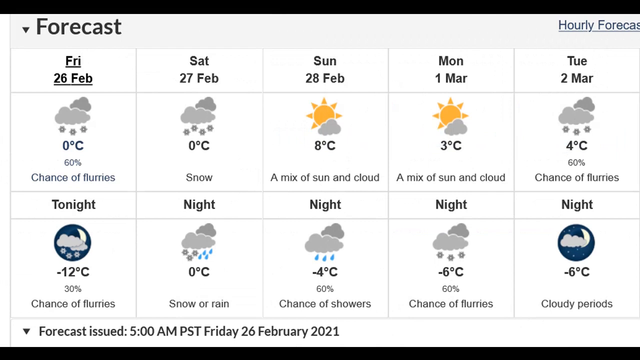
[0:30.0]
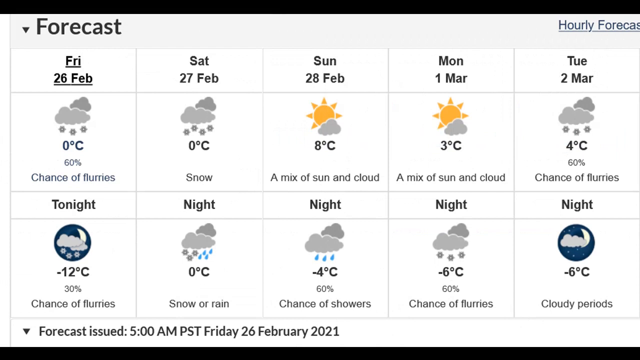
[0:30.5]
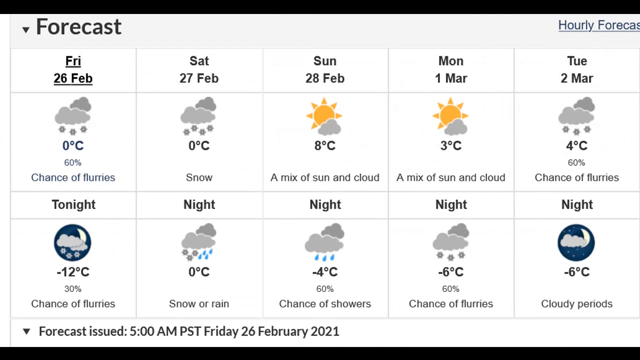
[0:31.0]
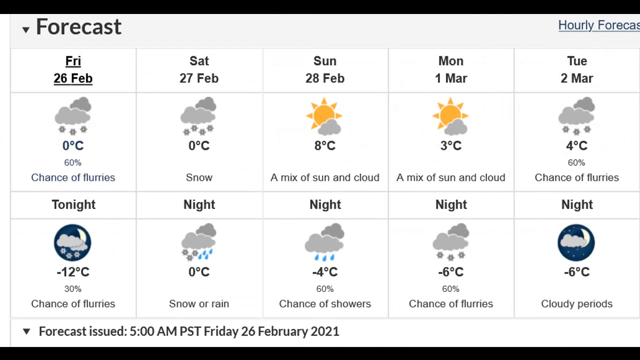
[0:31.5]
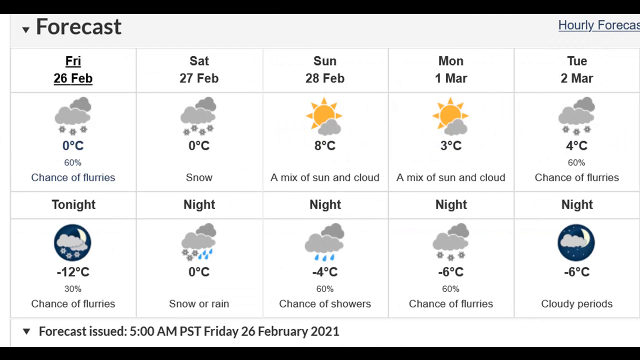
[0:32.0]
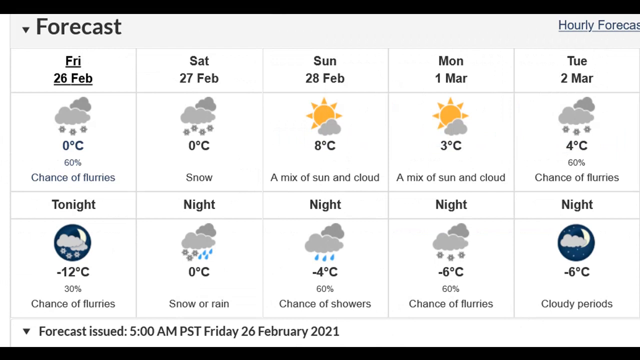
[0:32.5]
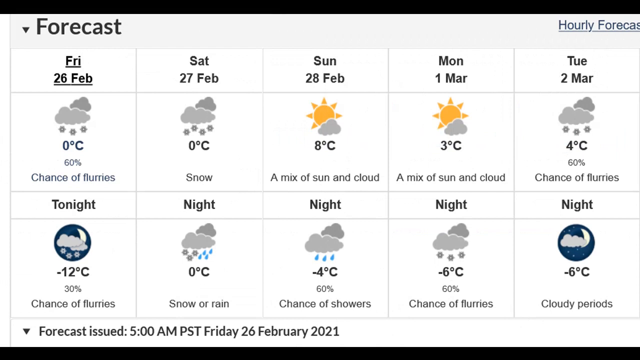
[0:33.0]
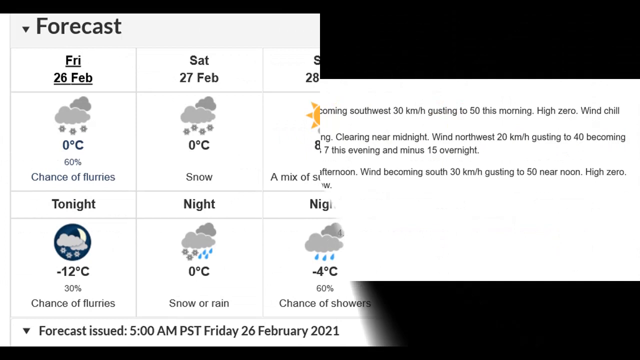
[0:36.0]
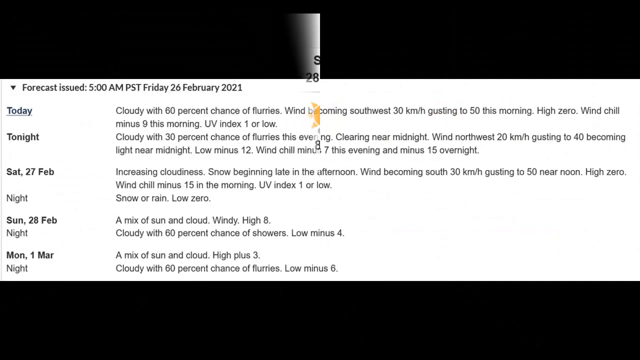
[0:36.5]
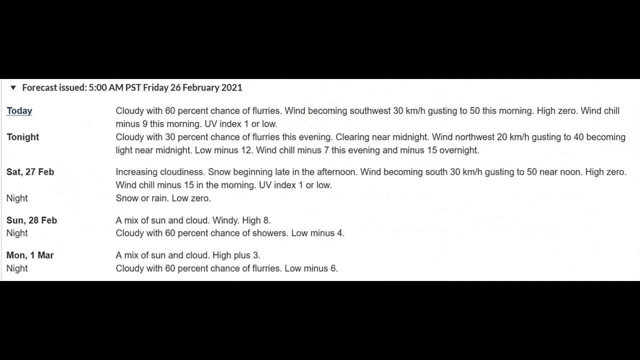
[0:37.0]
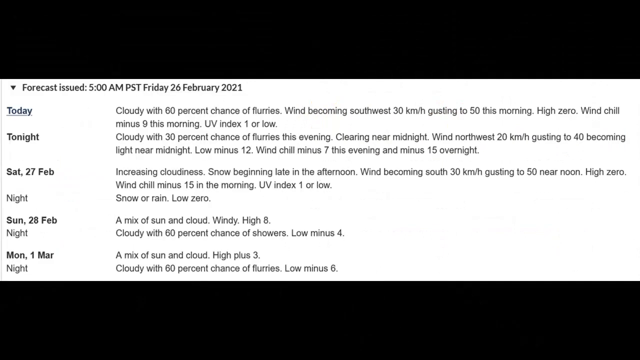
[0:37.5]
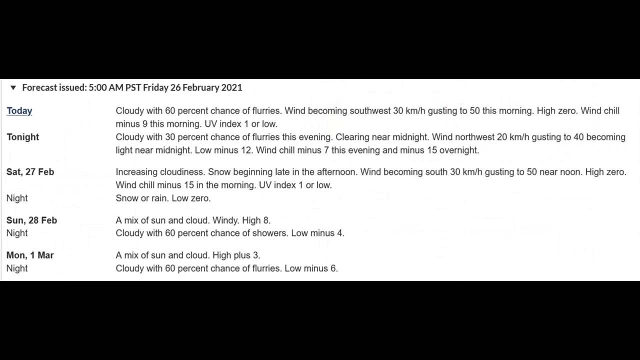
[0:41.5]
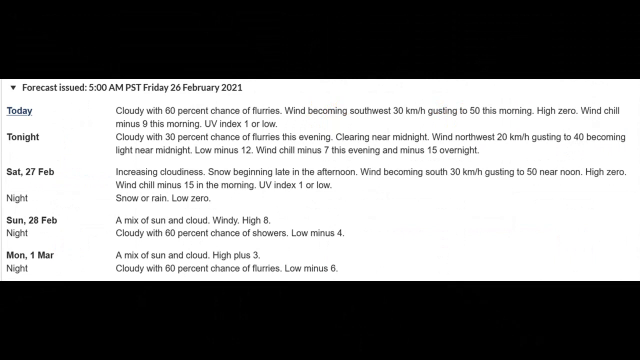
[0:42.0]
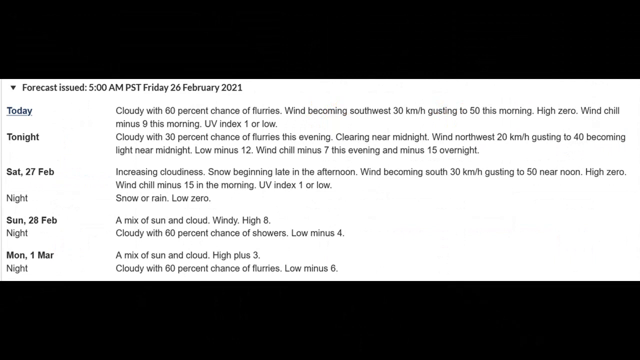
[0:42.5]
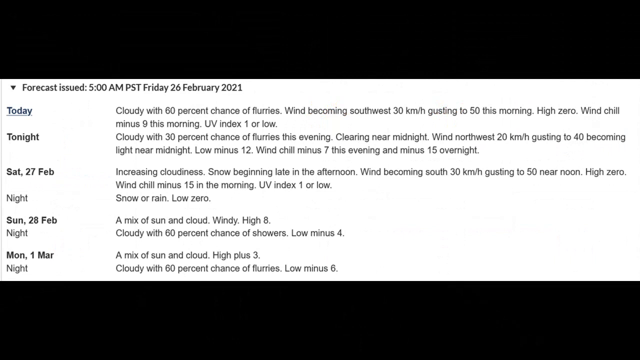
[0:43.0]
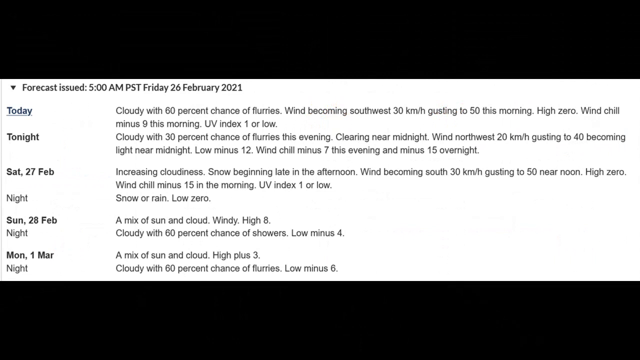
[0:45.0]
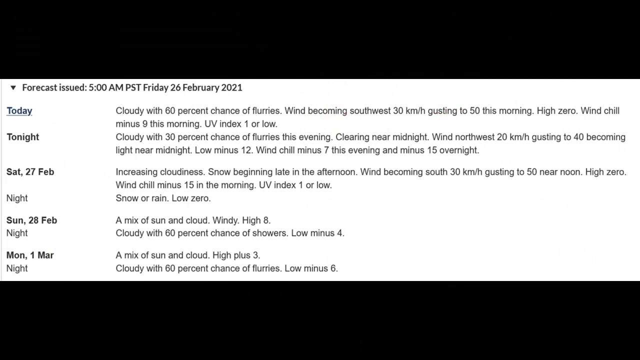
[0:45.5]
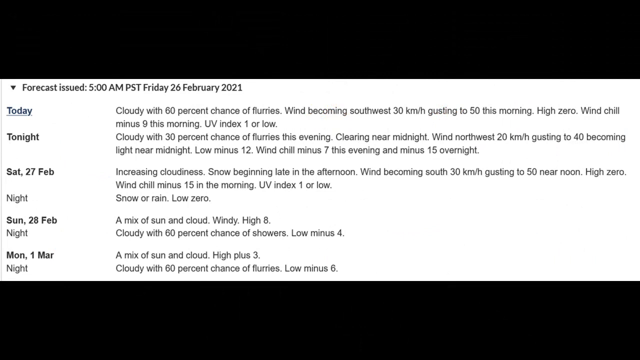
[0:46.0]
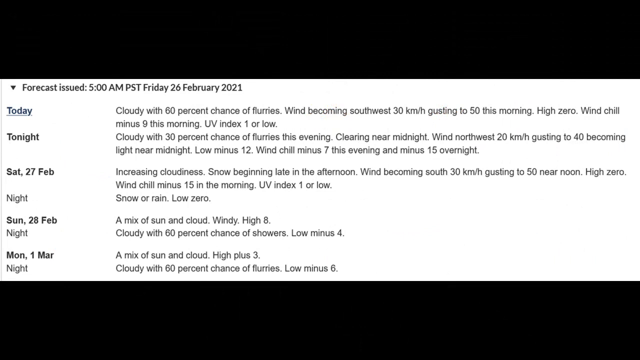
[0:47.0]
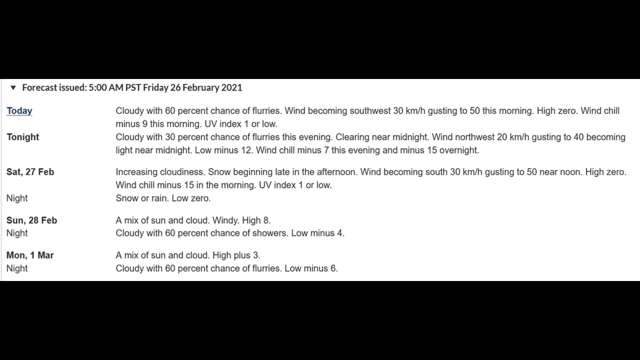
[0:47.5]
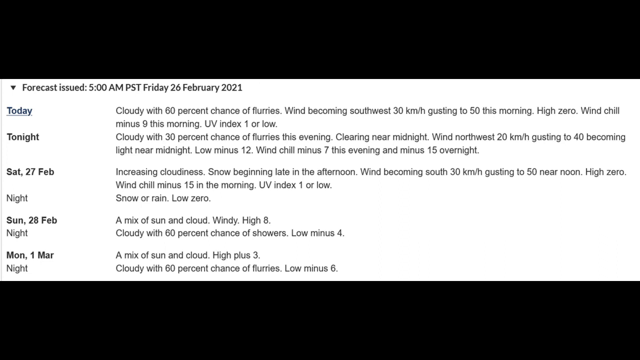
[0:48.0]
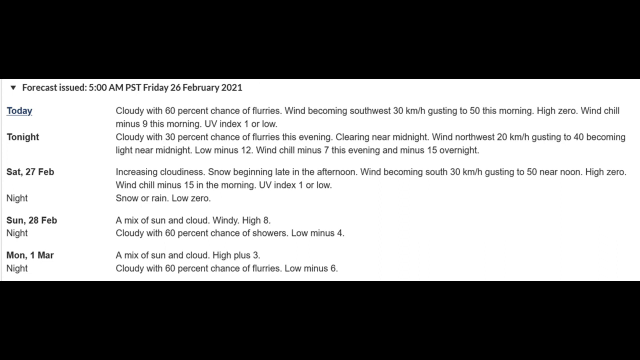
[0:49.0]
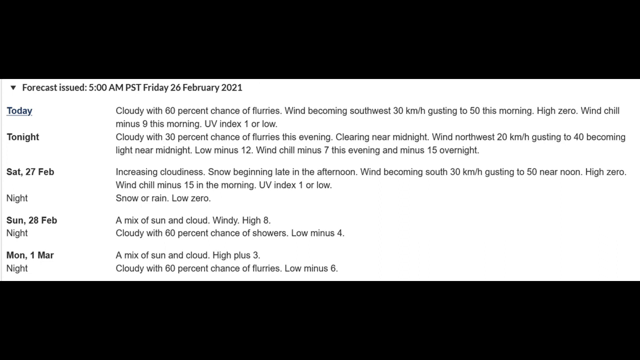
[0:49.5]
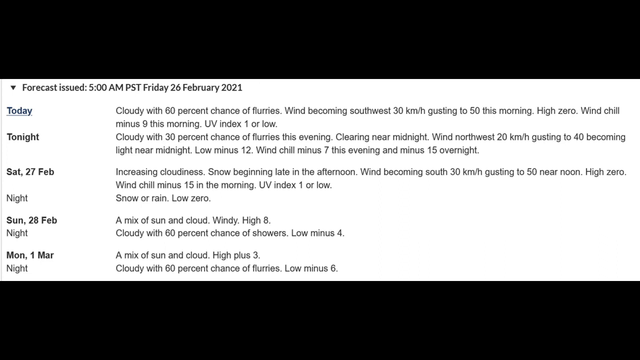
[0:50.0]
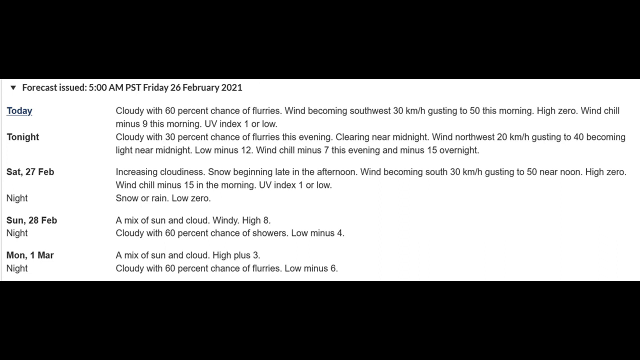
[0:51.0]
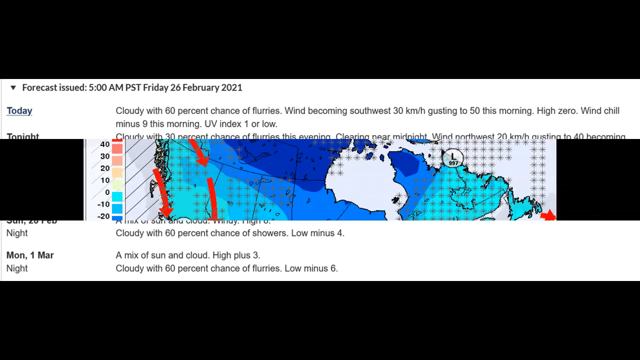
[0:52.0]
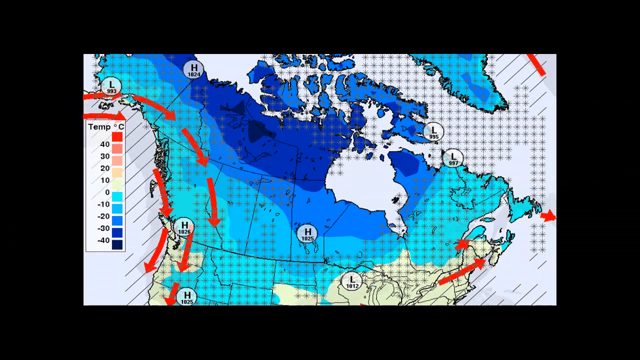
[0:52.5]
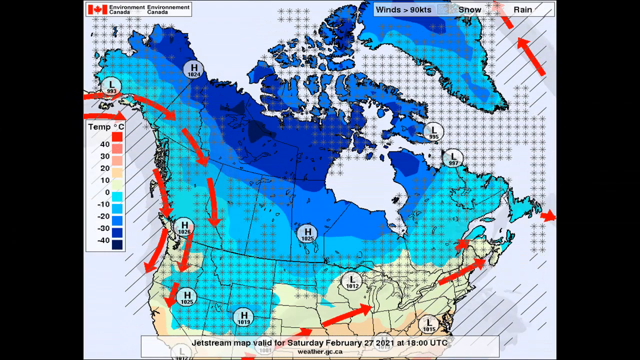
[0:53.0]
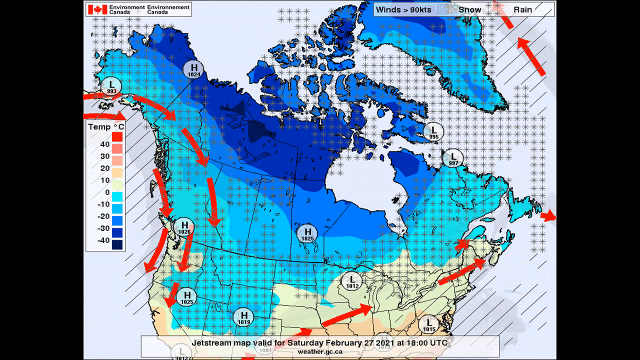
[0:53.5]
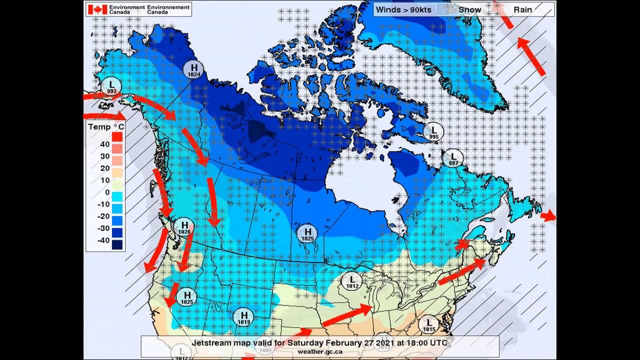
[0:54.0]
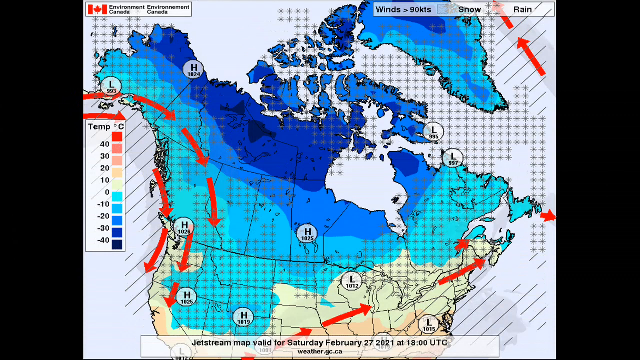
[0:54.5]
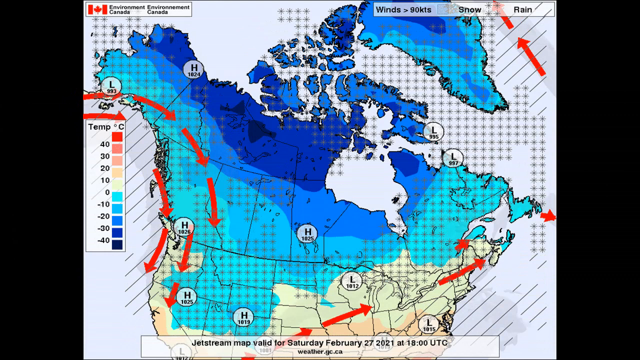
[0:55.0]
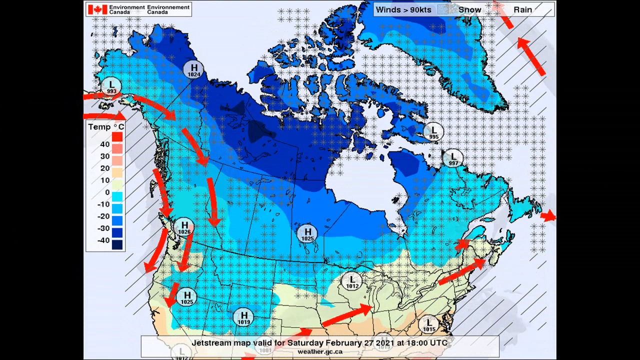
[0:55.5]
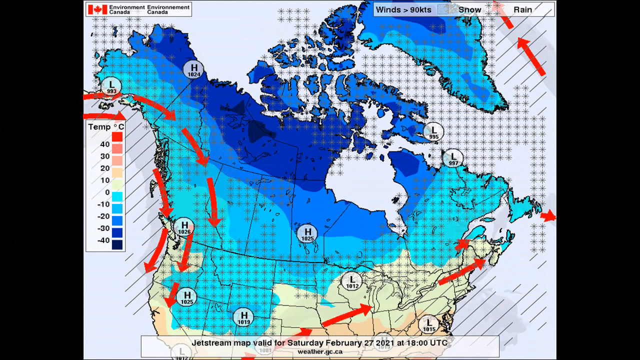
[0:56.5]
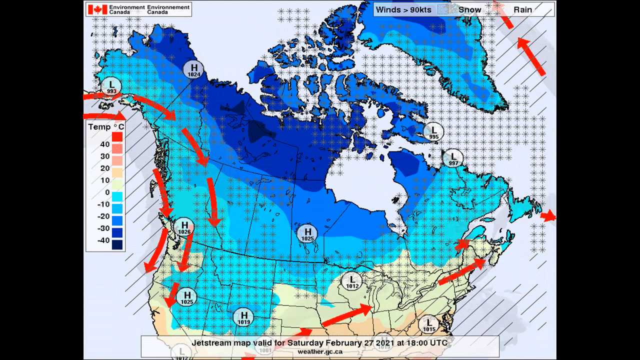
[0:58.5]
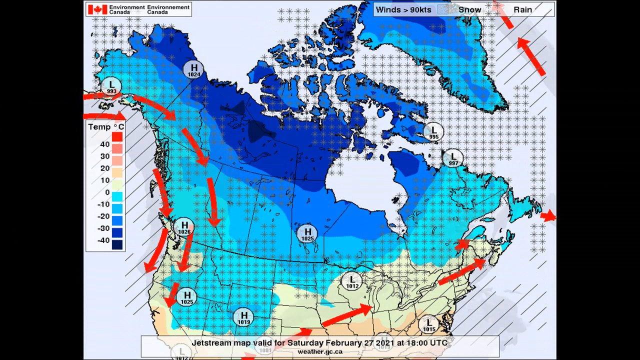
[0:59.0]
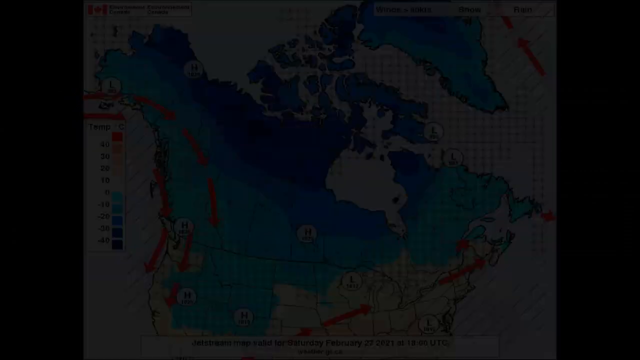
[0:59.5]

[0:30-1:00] A weather forecast chart on screen gives the forecast starting Friday, 26th of February: cloudy, a 60% chance of rain and zero degrees, and for the night minus 12 degrees with a 30% chance of precipitation. Saturday, listed as February 28th, shows zero degrees and snow, and at night zero degrees with snow or rain. Sunday, 28th February, shows 8 degrees amid sun and cloud, and at night minus 4 degrees with a 60% chance of showers. Monday shows 3 degrees amid sun and cloud, and the night of Monday, 1st of March, minus 6 degrees with a 60% chance of flurries. Tuesday, the 2nd of March, shows 4 degrees with a 60% chance of flurries, and at night minus 6 degrees with cloudy periods. A note says the forecast was issued on Friday, 26th of February, and forecast text begins with cloud and a 60% chance.